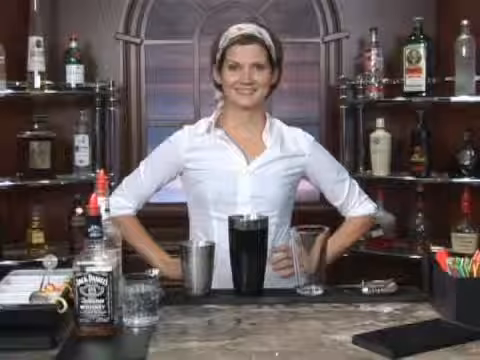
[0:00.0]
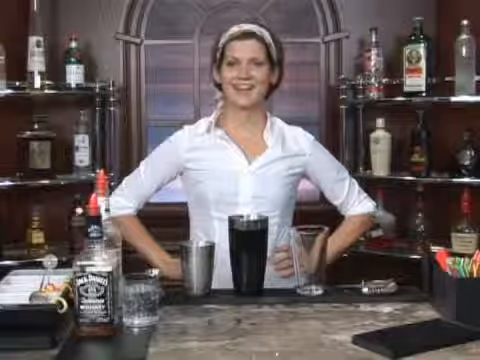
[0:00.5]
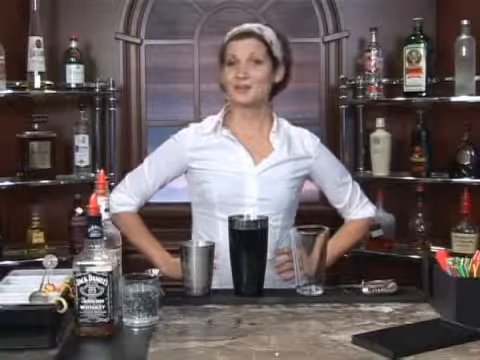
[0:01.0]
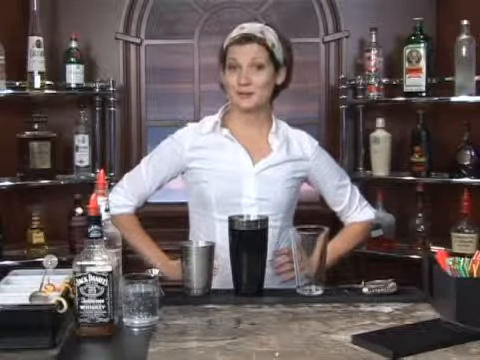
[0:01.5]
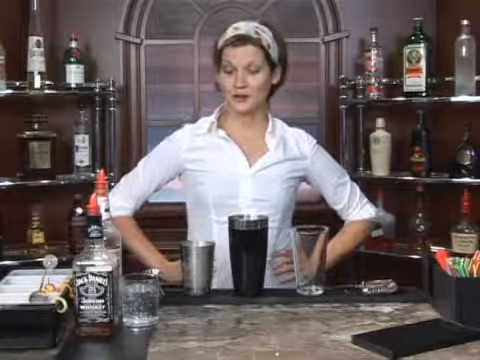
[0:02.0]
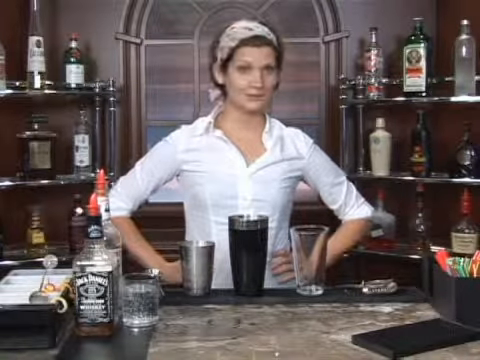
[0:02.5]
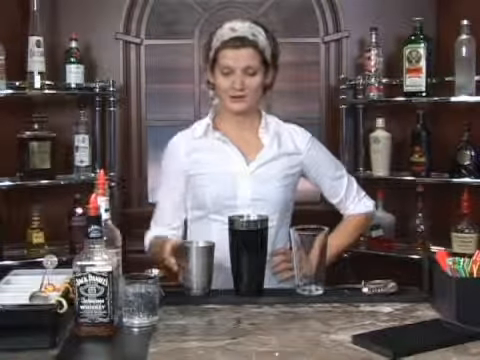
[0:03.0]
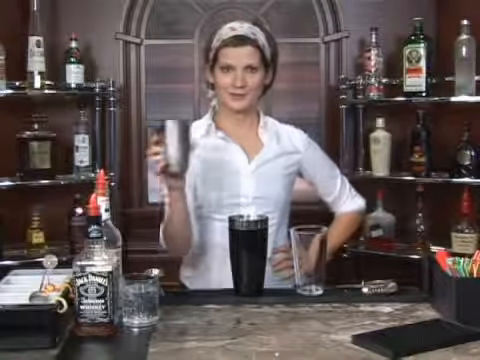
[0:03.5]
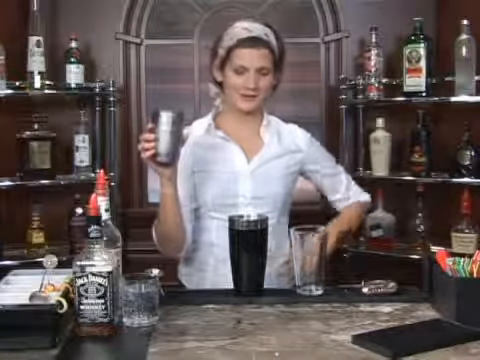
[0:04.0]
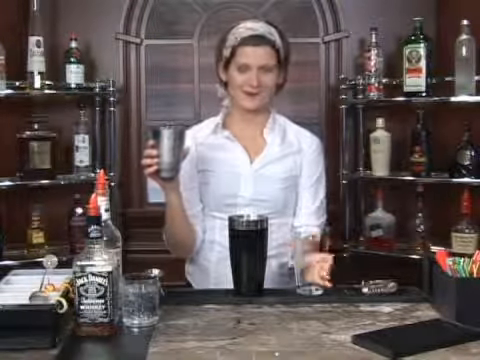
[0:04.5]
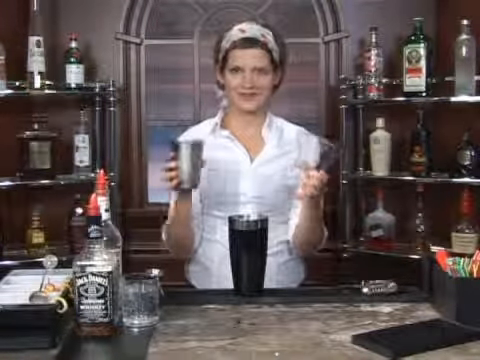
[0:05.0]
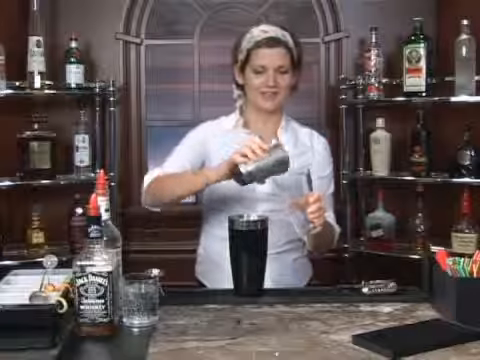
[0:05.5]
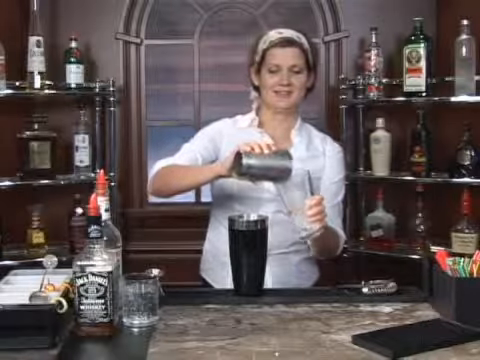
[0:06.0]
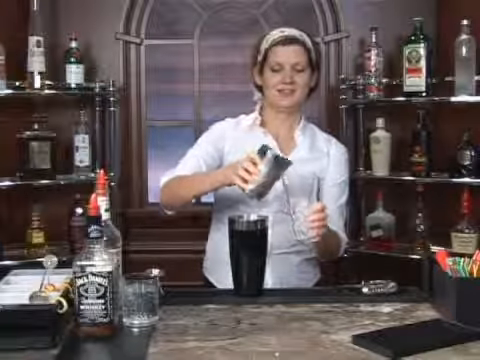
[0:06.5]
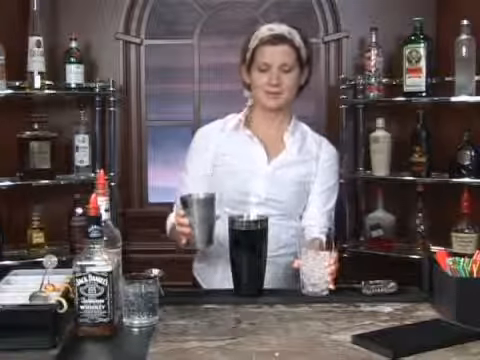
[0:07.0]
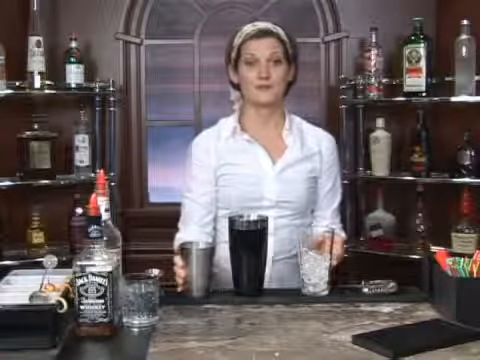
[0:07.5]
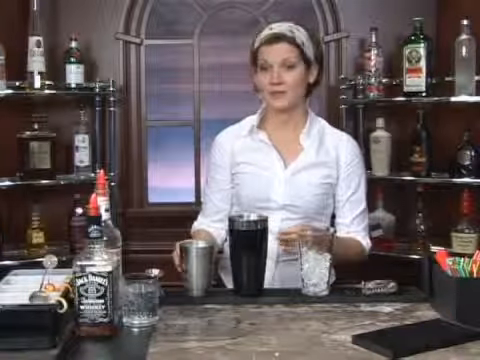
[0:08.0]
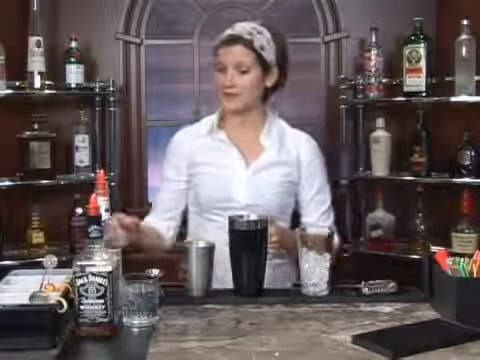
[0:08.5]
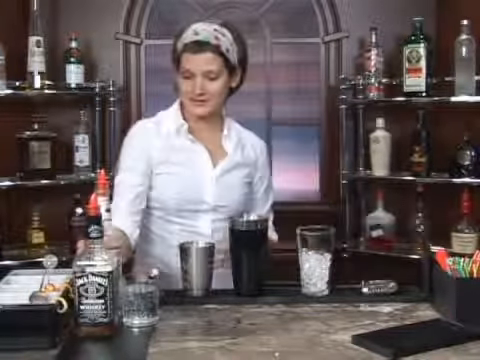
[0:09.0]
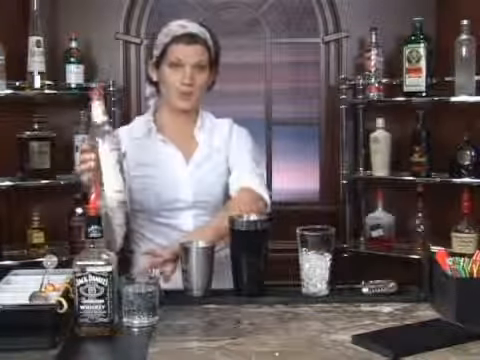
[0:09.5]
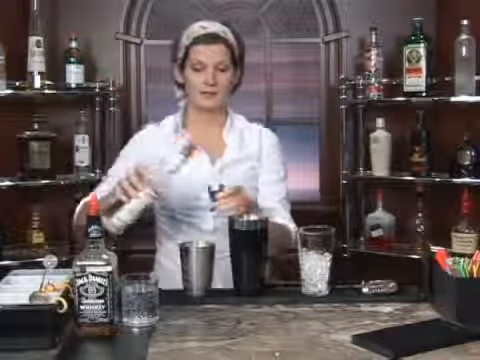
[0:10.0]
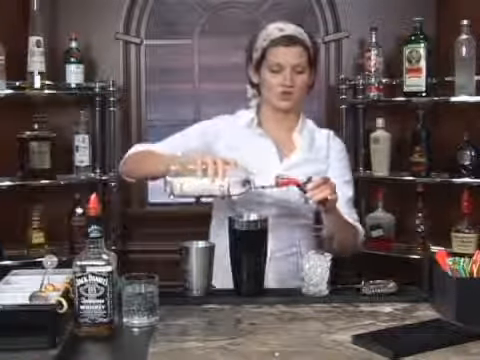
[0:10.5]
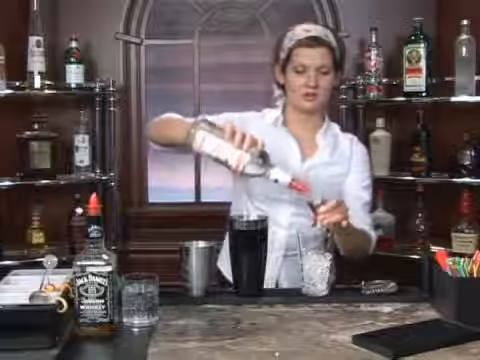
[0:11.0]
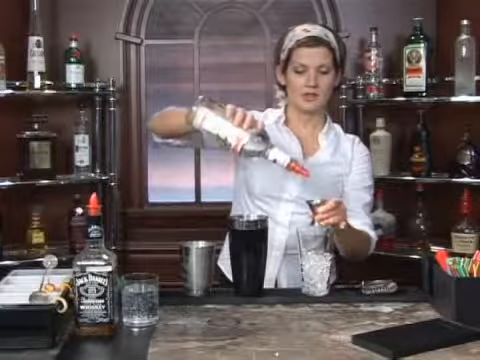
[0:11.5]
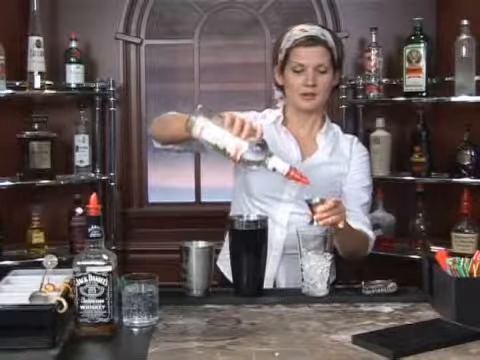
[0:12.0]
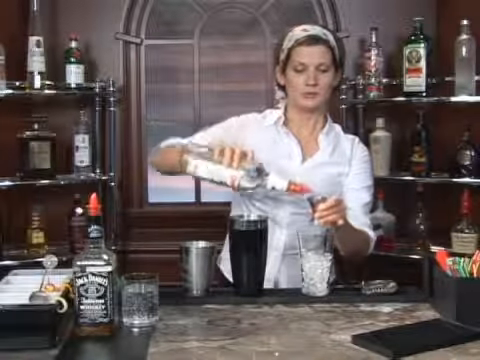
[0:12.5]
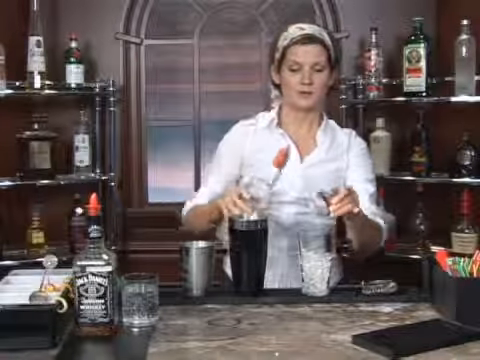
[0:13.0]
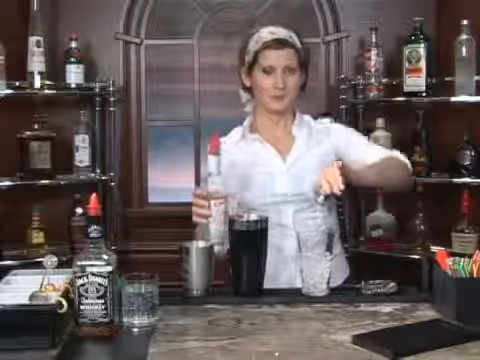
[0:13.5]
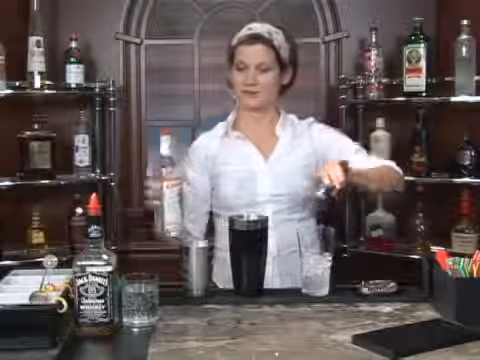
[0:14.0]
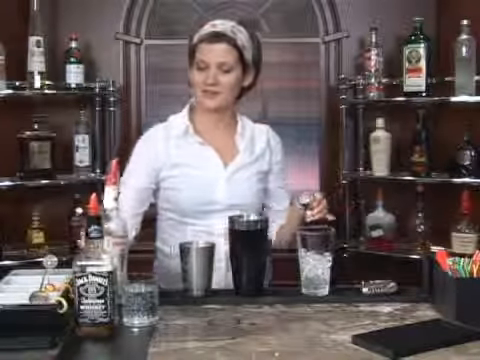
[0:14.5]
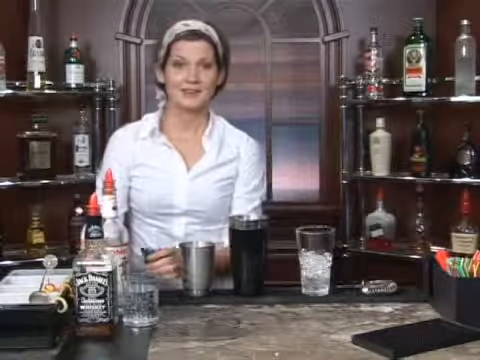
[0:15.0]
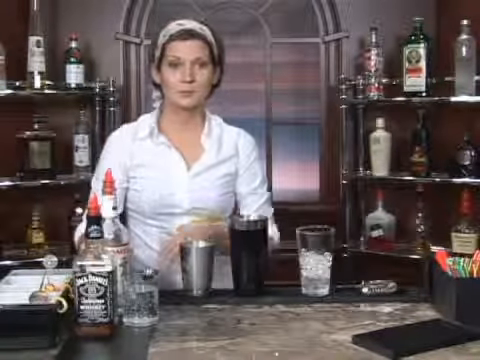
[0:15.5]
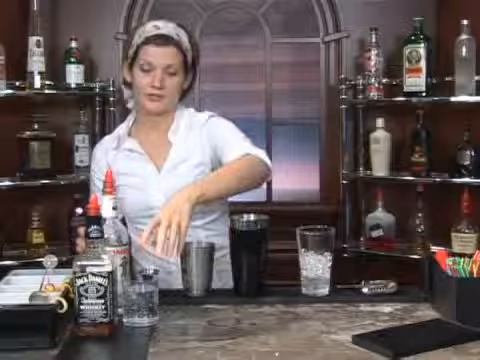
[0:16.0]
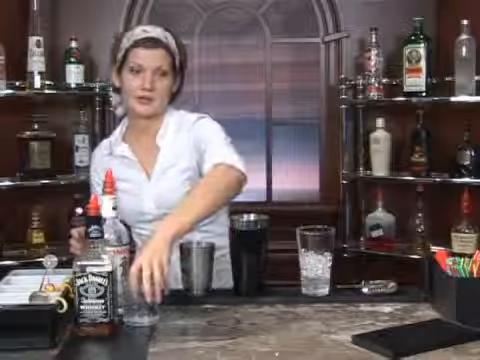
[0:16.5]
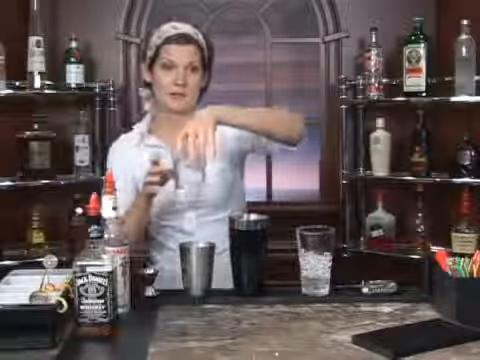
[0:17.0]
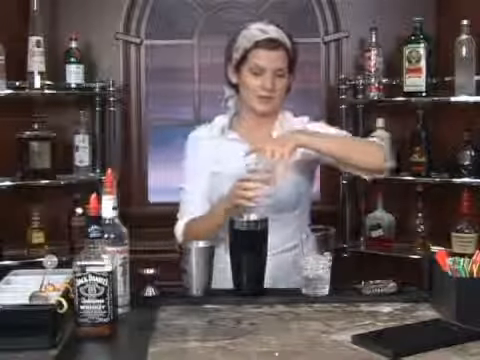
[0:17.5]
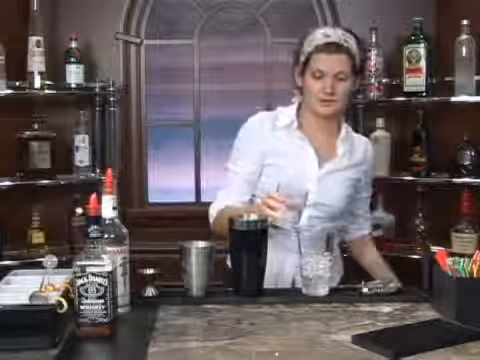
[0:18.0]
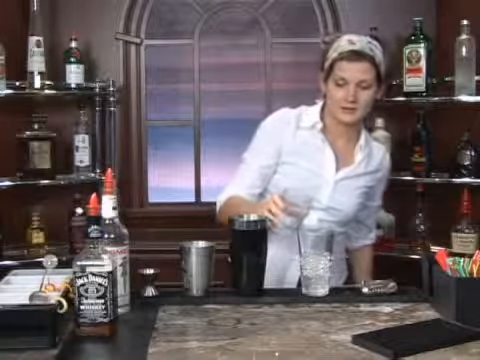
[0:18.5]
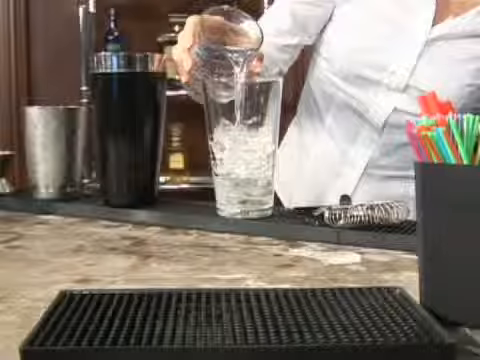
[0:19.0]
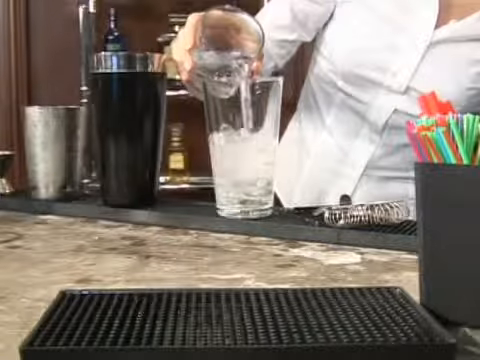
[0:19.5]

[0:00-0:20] The footage appears to be old, from earlier times, and shows a woman in a white shirt with a hairband in her brown hair. She mixes different kinds of alcohol, making what looks like a cocktail, and also adds a soda. Various liquors are presented in the background, including Jägermeister, different types of gin and different types of vodka. She appears to be at a bar, with a small window behind her and a bar table that has Jack Daniels on it. There are different types of glasses, some plastic, some aluminium and some glass, along with various mixers.